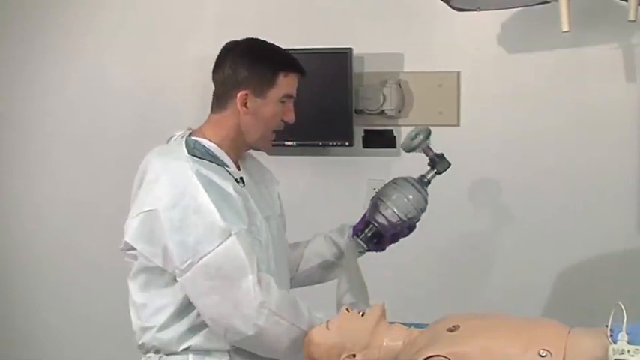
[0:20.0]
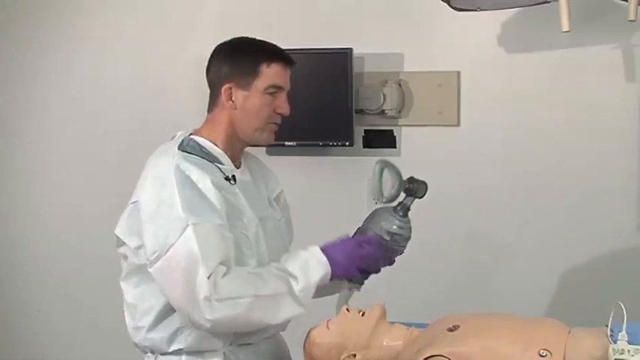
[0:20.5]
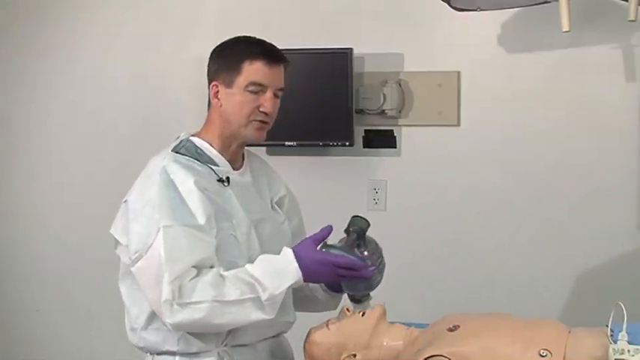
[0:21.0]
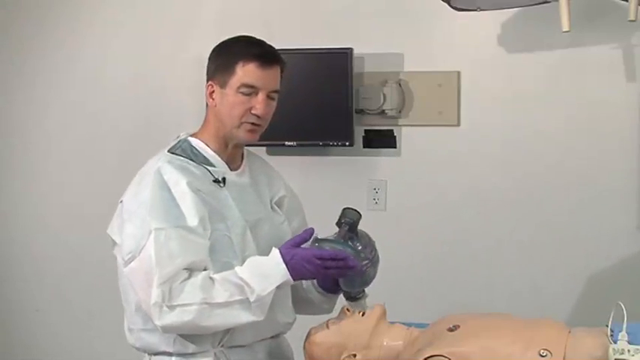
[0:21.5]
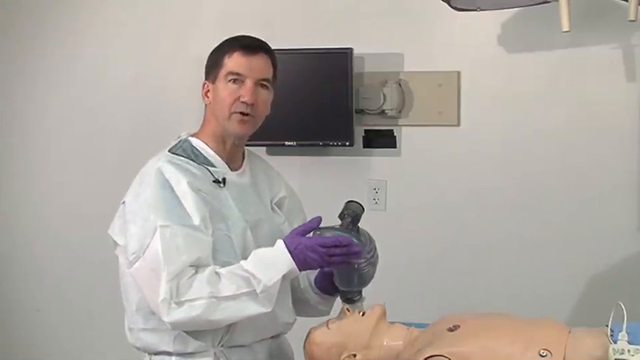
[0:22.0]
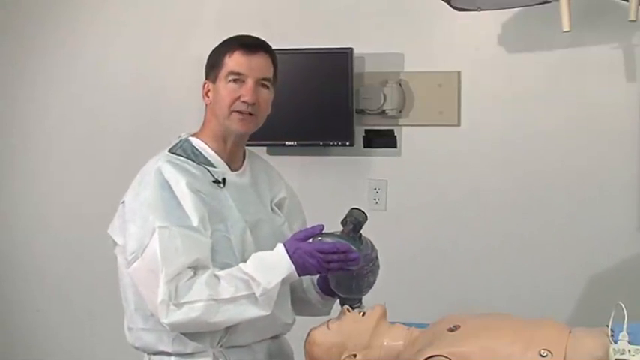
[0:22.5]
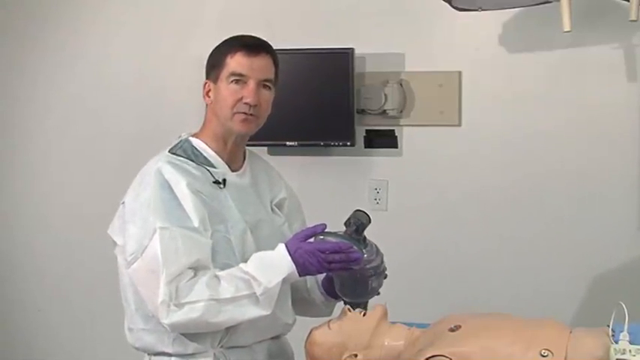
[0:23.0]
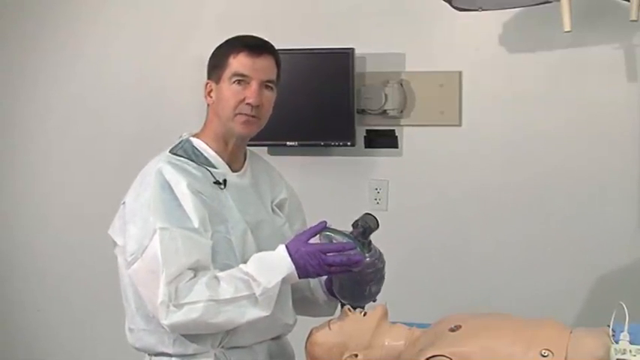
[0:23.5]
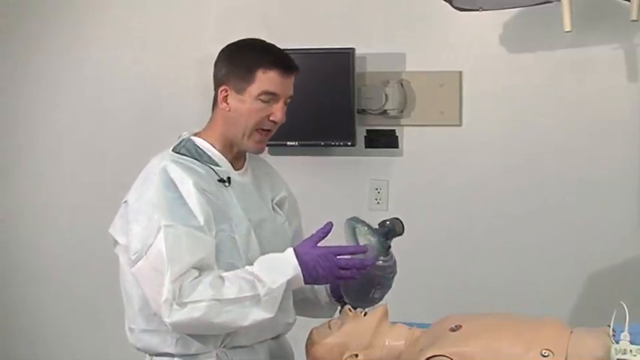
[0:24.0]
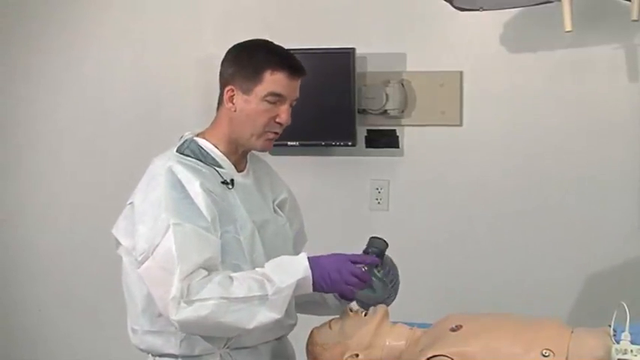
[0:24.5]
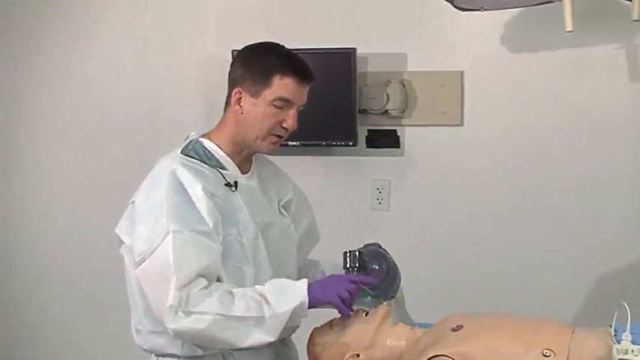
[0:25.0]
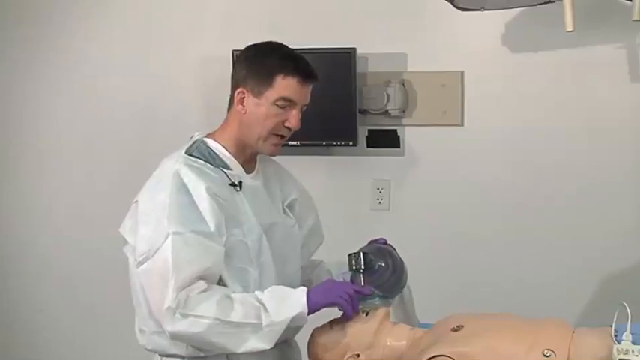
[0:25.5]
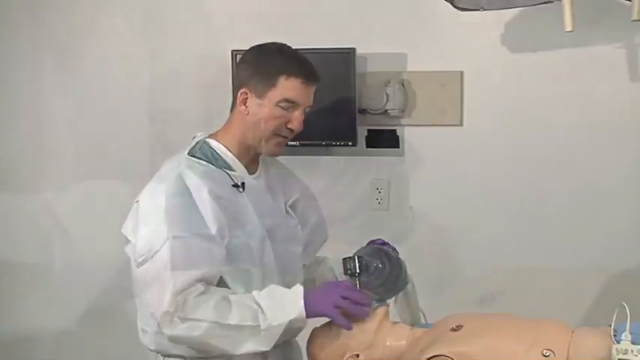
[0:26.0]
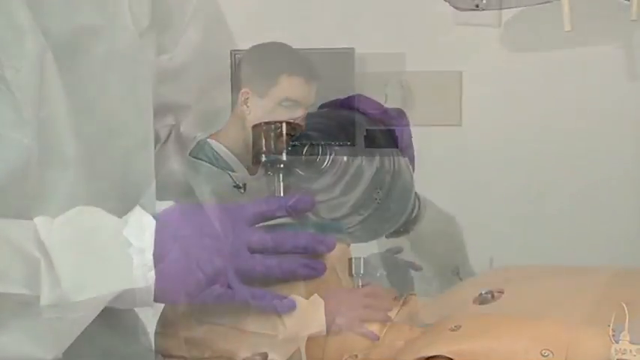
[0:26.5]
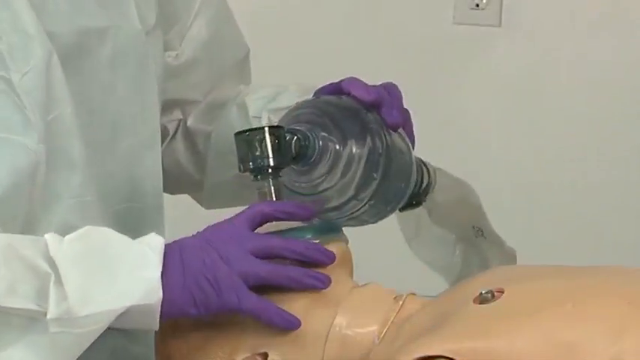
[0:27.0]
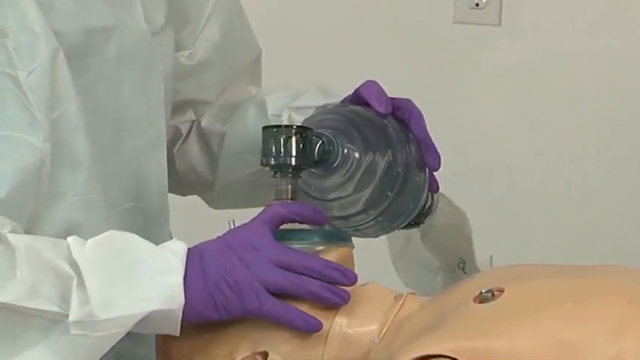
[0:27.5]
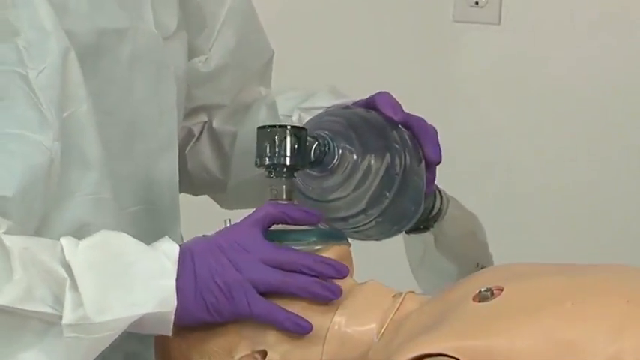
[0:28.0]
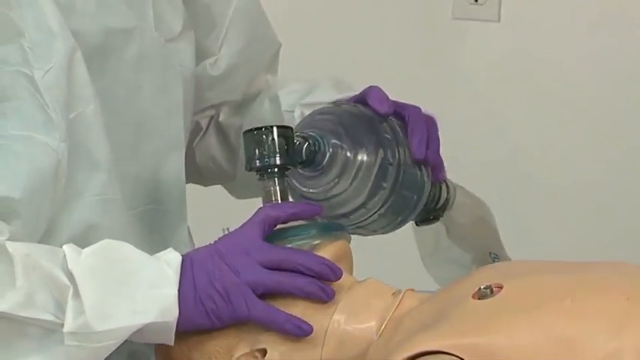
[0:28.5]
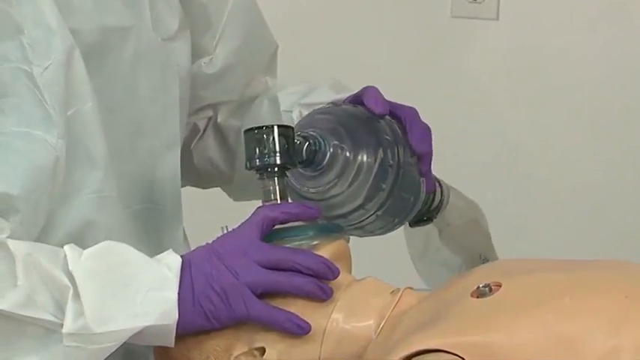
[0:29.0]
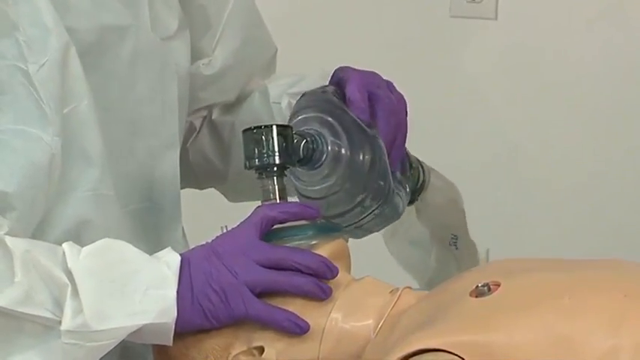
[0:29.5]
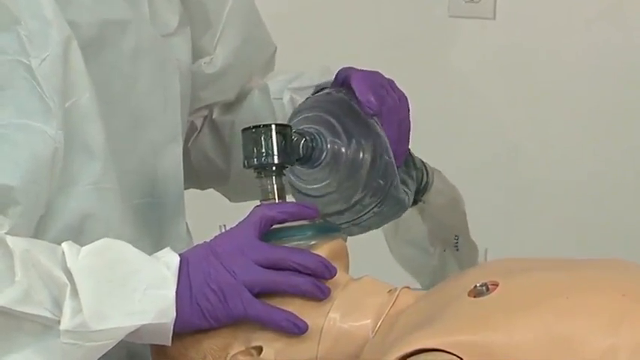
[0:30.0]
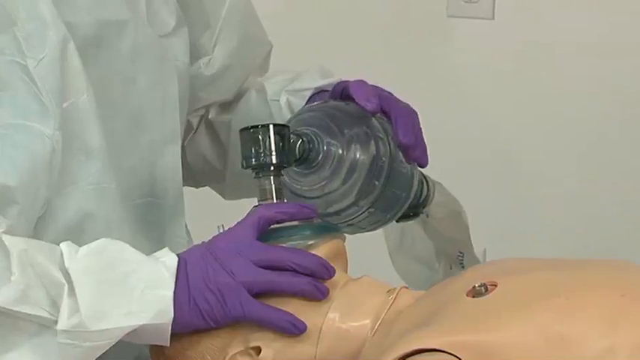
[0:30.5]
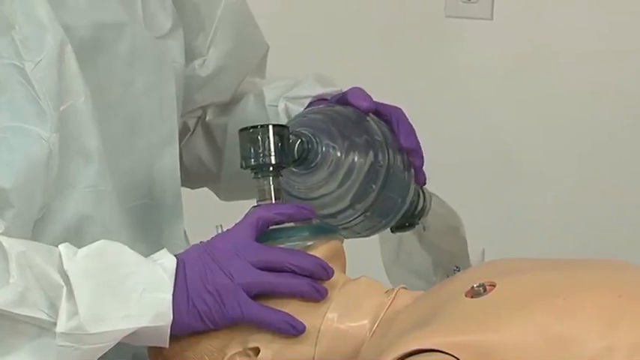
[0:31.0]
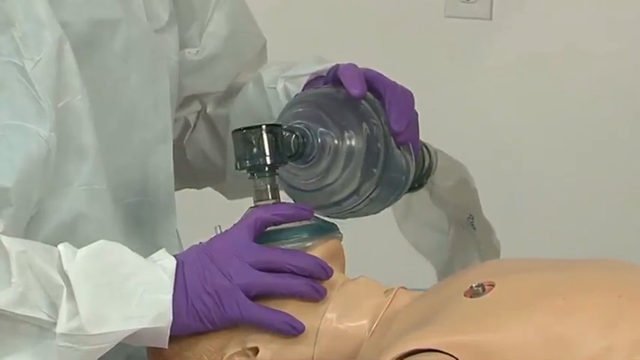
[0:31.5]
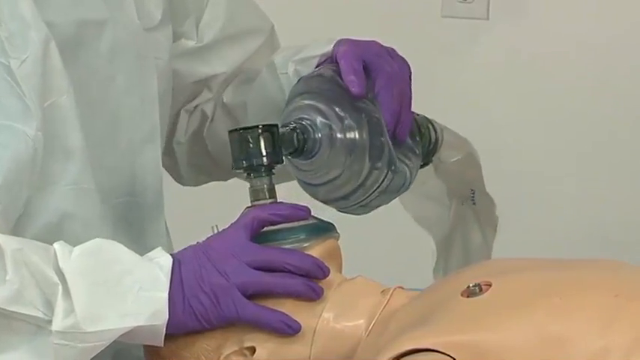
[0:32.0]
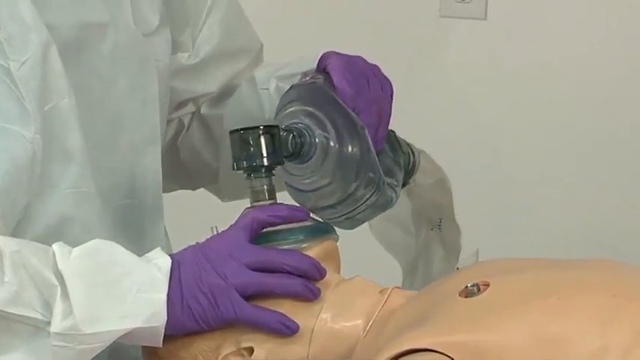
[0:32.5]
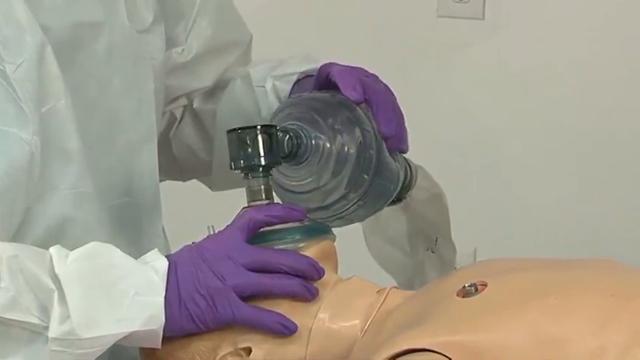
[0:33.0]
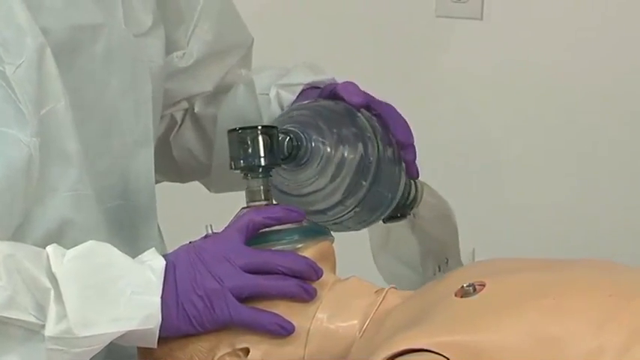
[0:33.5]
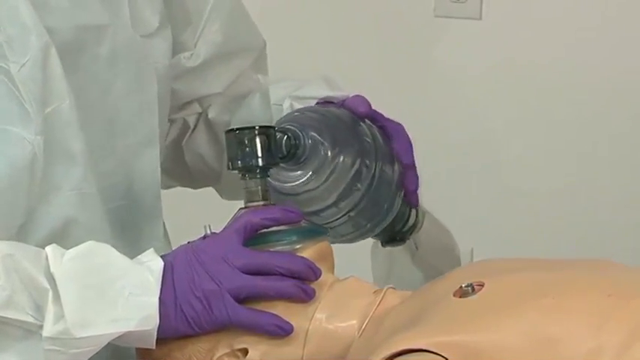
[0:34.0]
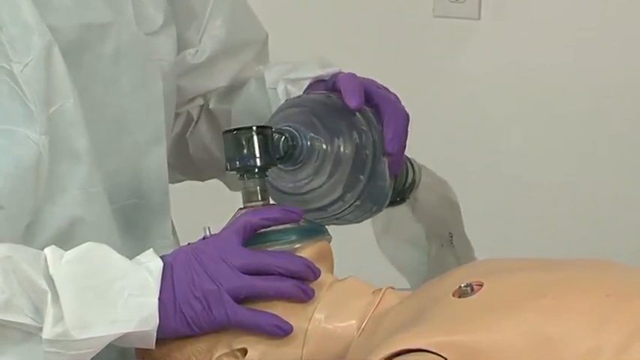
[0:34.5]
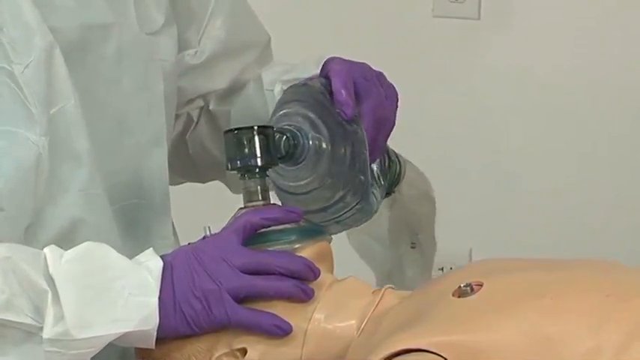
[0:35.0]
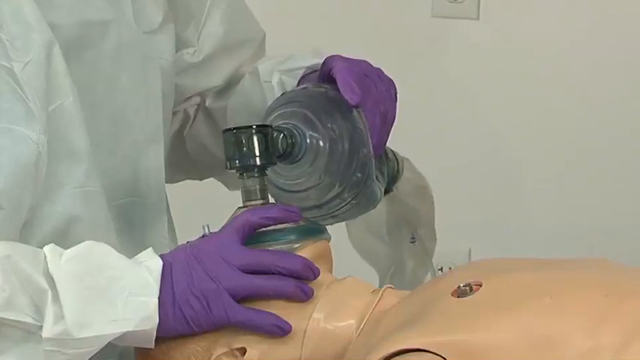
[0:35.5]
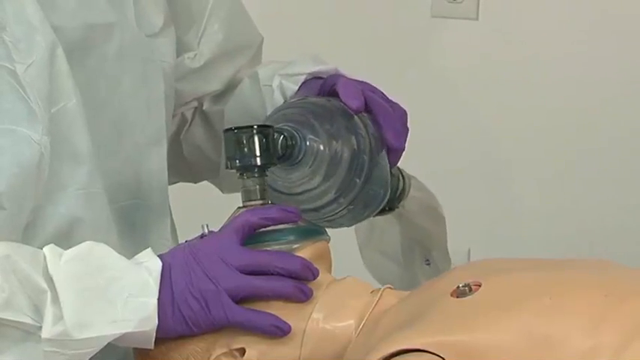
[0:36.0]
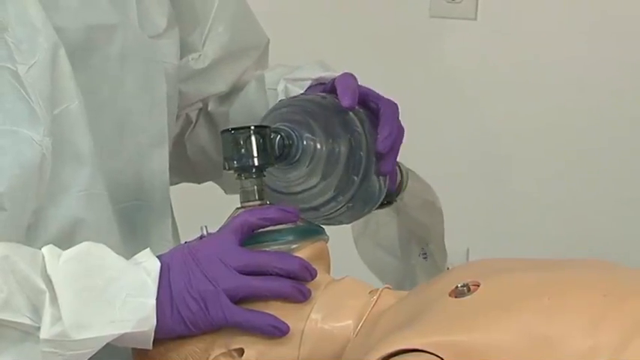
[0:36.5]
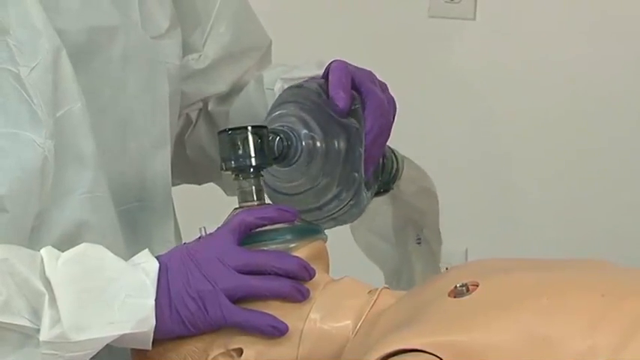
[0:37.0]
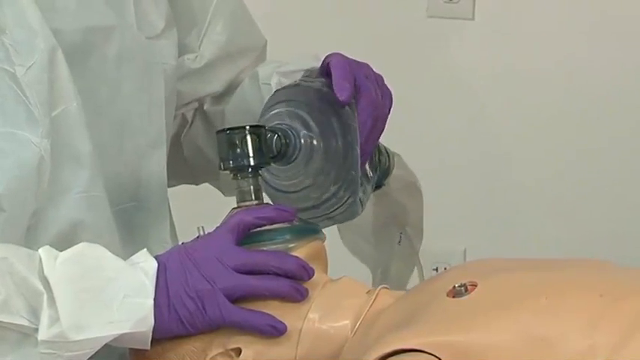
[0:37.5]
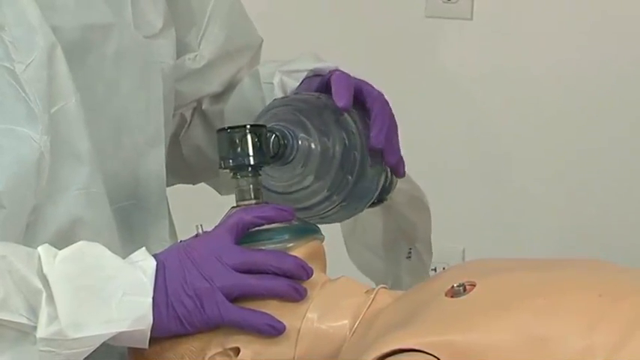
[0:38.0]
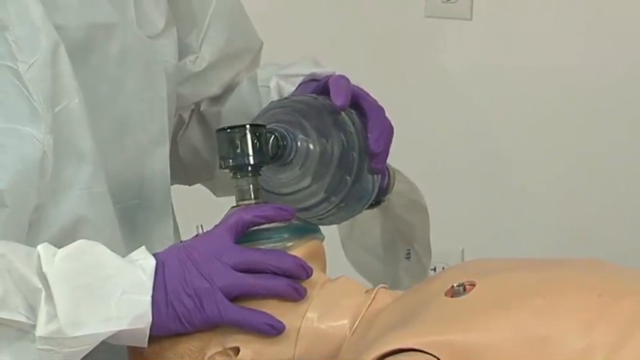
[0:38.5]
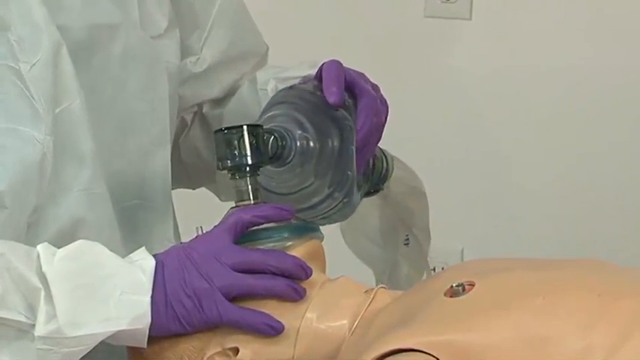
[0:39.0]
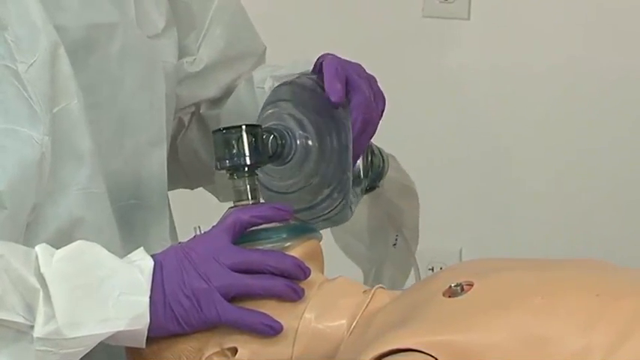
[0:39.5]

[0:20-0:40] A doctor holds what appears to be some kind of air pump and looks at it. A medical mannequin, like a dummy, is lying down, and the room looks like a healthcare room. A TV is on the wall, and another piece of equipment is toward the wall in the top right corner. The doctor looks down at the pump, touches it and looks at the camera. He then begins to place the pump over the mannequin's mouth. A close-up shows the pump on the mannequin's mouth as he begins to squeeze it to put air into the mannequin's mouth. He does this very slowly and continues doing it for the rest of the shot.